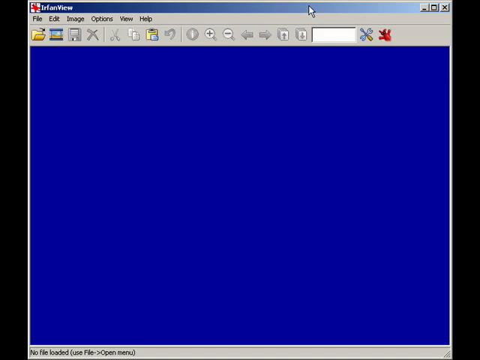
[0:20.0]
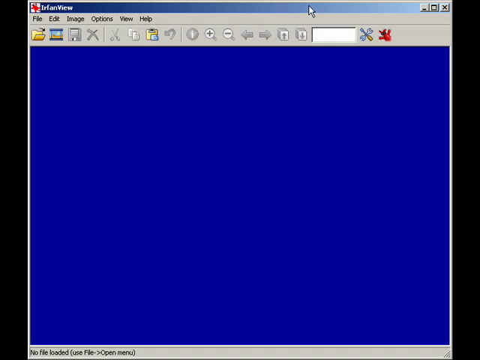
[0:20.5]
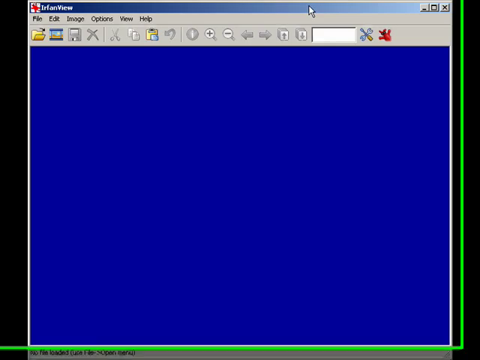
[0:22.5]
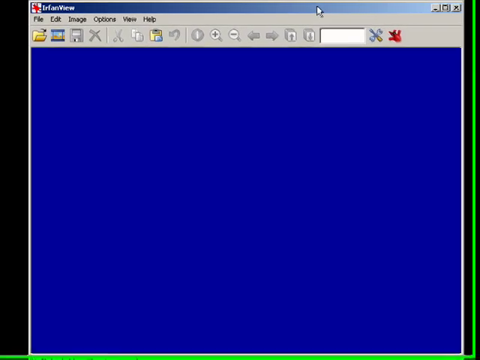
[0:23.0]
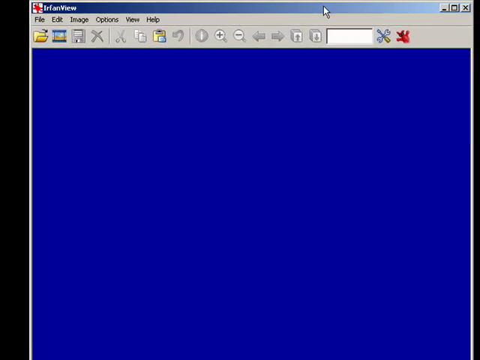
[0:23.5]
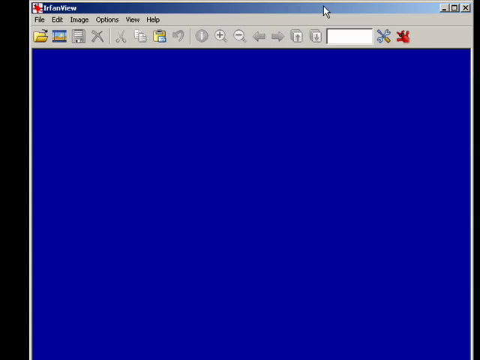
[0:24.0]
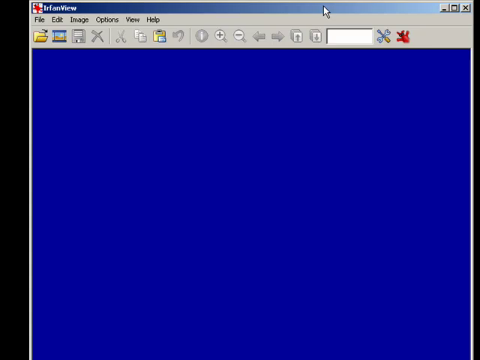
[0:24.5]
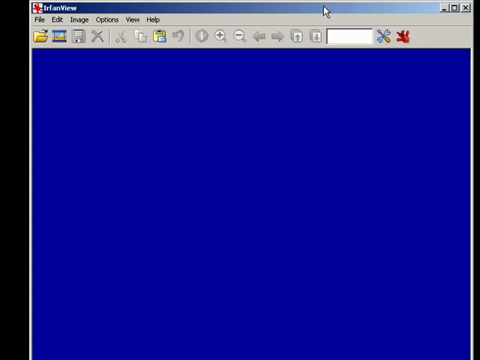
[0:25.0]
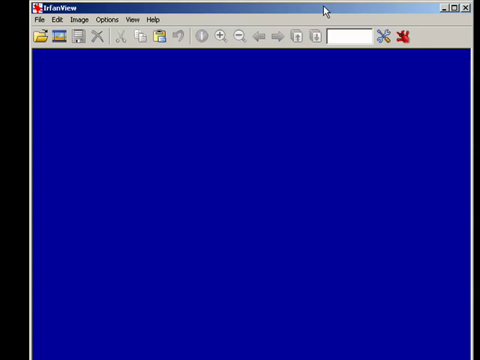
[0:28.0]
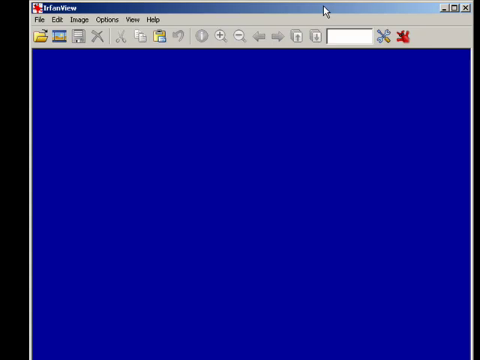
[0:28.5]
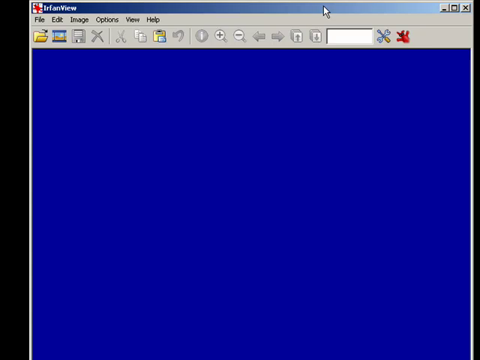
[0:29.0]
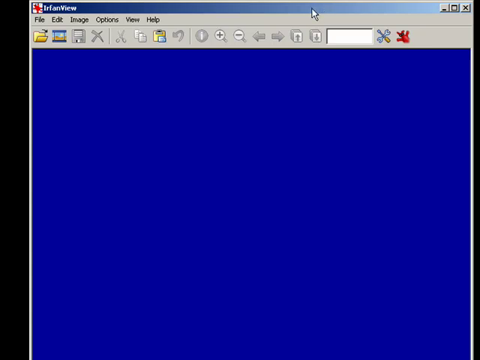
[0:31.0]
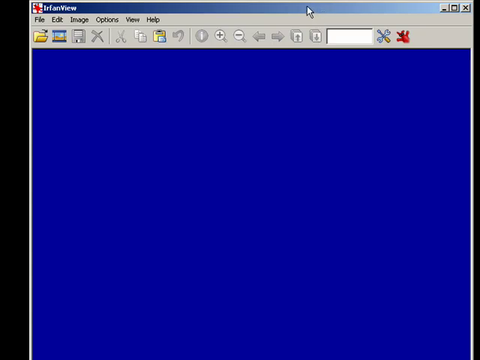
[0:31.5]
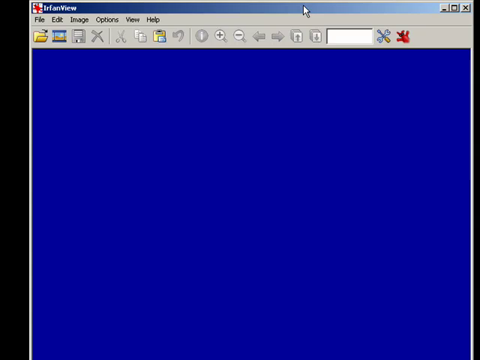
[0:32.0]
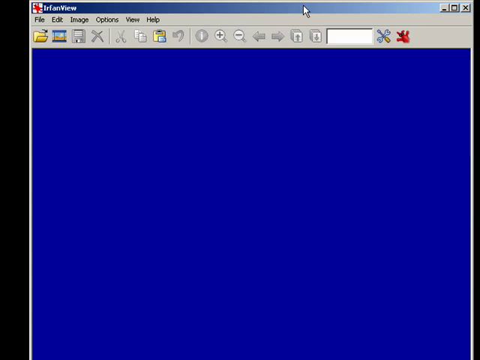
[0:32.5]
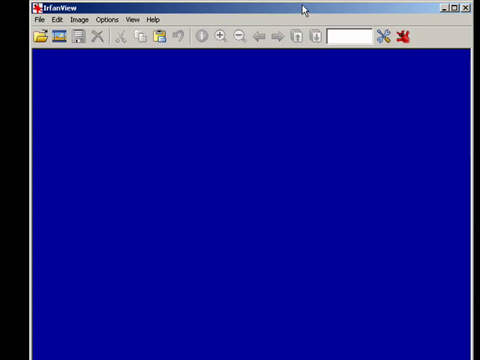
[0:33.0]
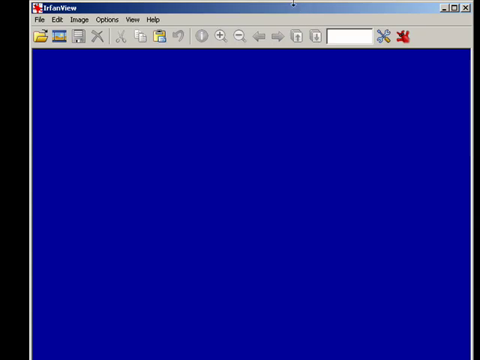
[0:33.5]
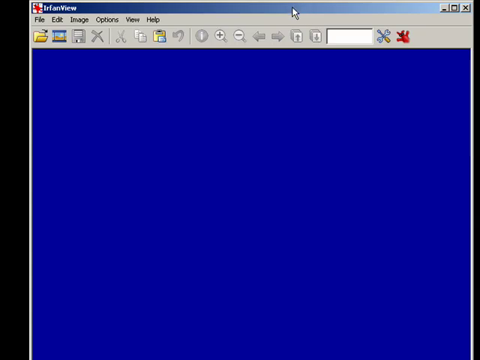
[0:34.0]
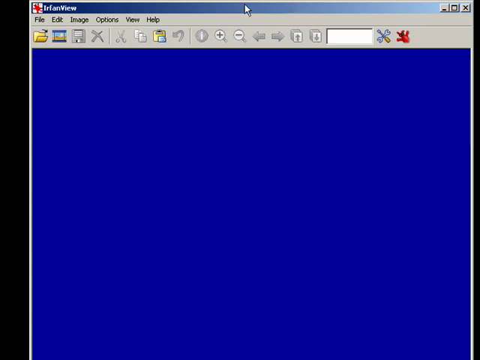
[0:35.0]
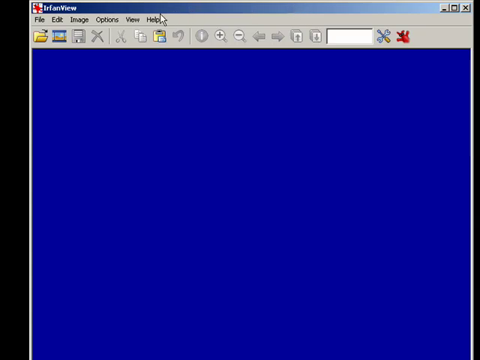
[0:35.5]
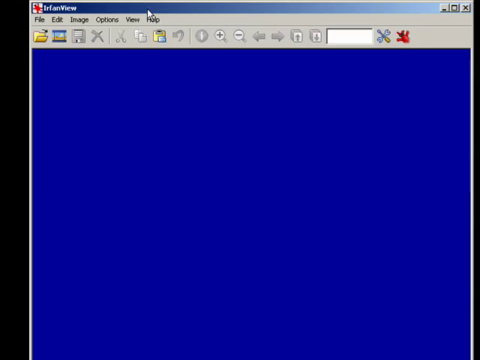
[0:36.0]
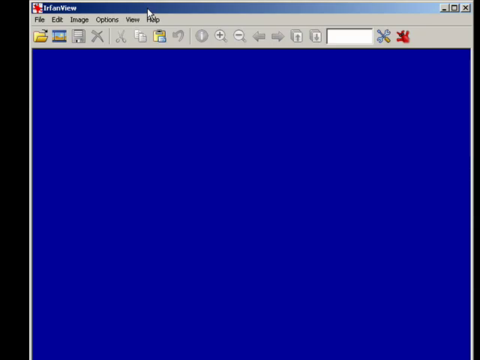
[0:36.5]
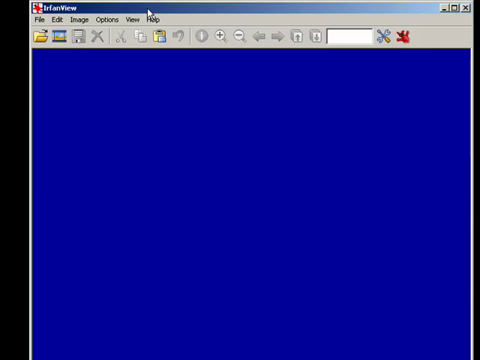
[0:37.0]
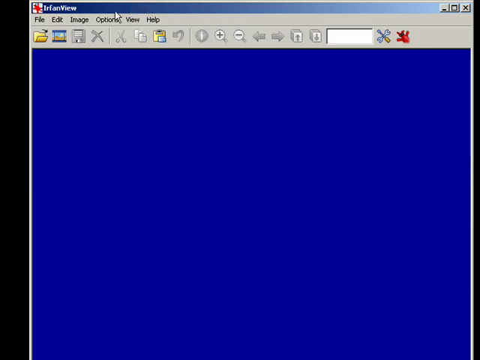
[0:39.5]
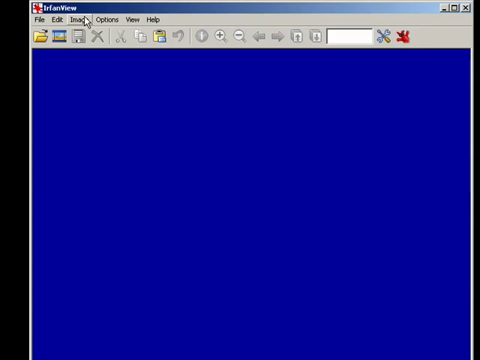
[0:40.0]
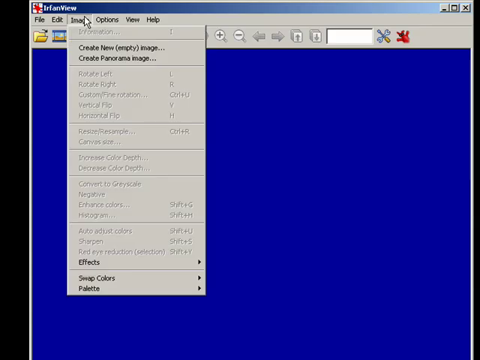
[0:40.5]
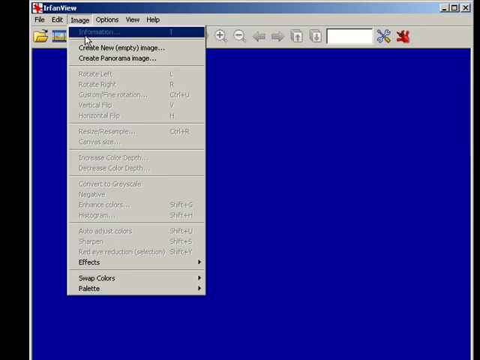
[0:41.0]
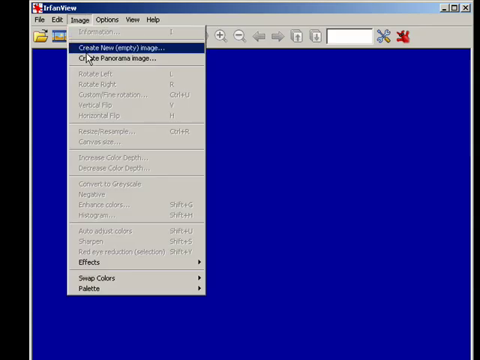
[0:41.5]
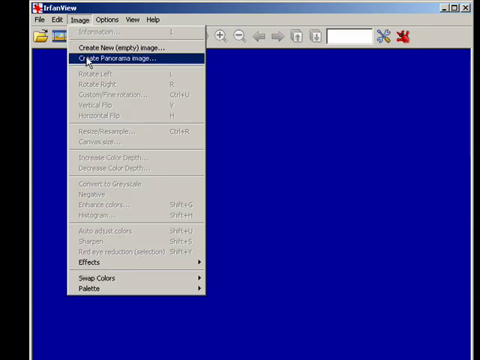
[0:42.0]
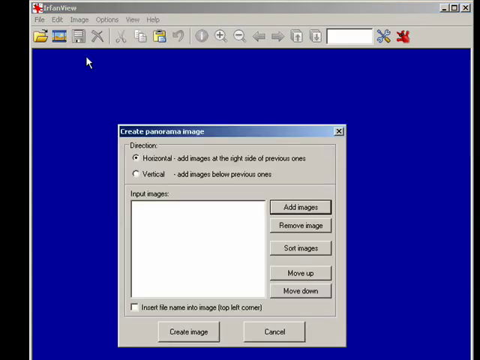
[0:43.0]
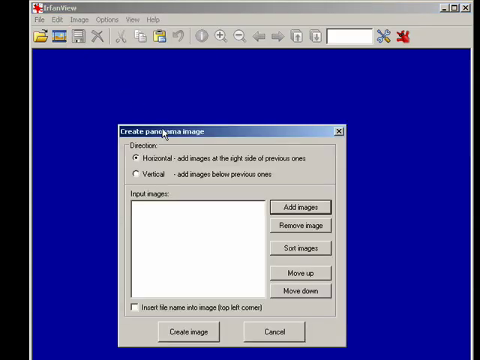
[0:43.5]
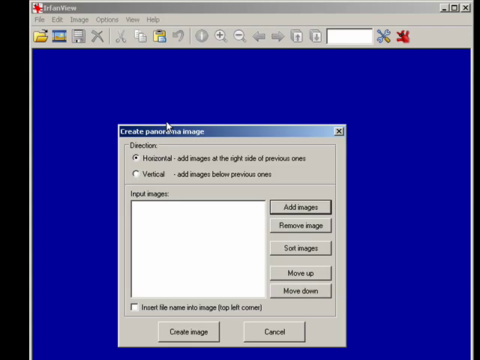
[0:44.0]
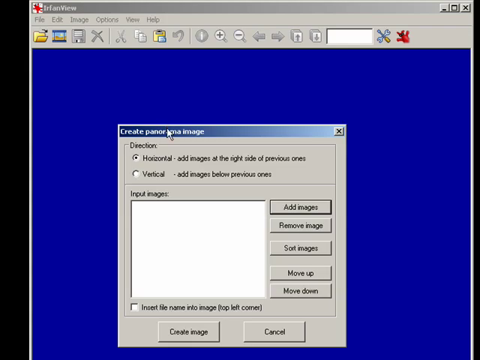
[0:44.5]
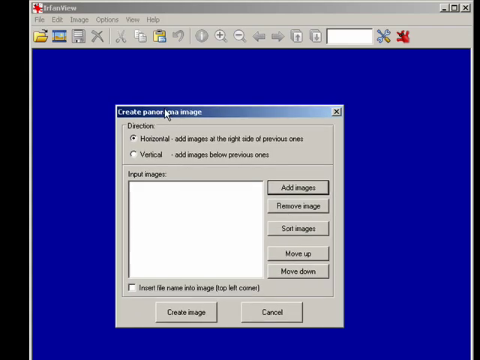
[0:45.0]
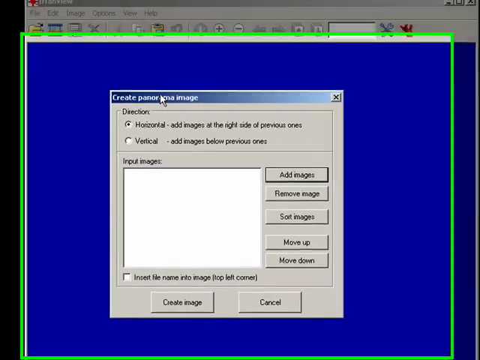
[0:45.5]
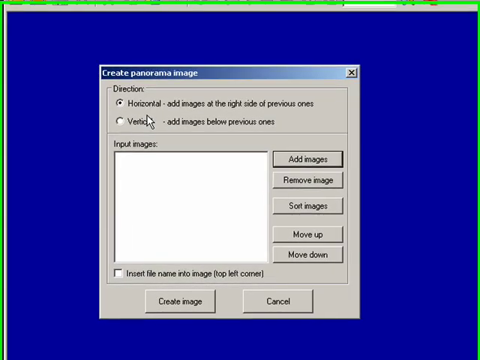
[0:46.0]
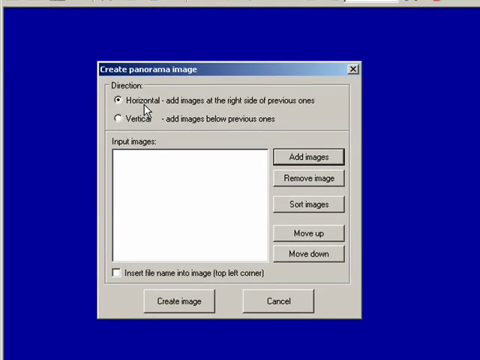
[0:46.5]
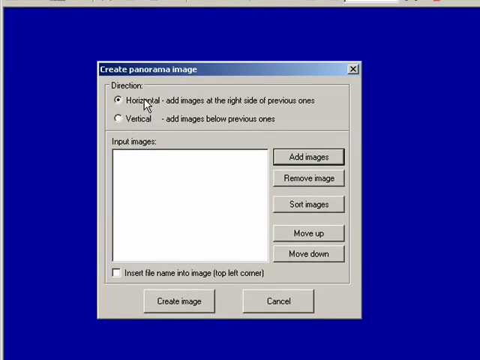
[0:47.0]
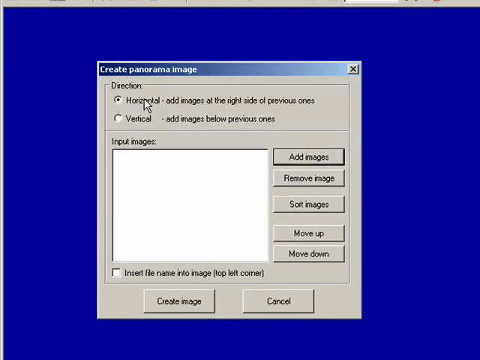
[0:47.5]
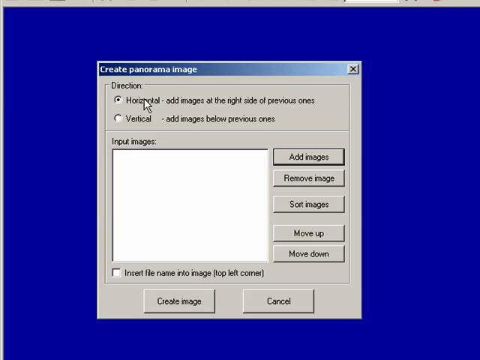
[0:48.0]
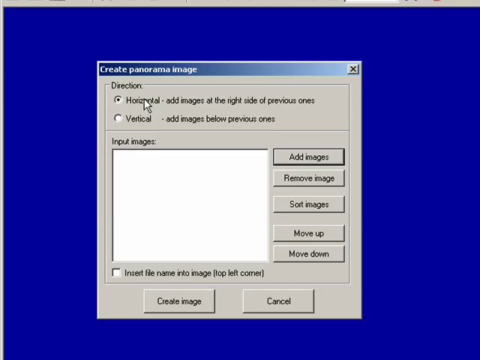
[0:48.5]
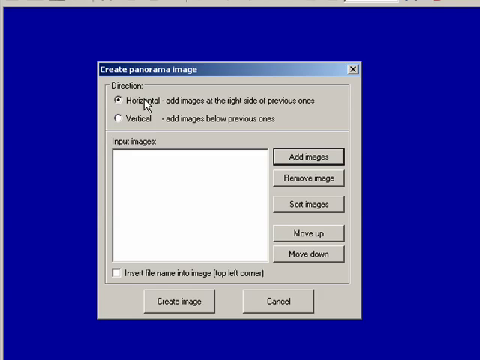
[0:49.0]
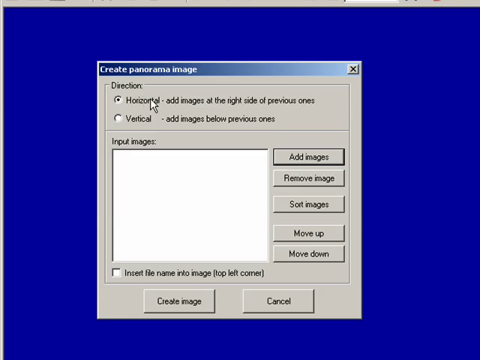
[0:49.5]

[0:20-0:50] After a click, the document suddenly extends a little to the right, with a green vertical line on the right apparently showing where the program window is going to be; it is white. On the right side there is a narrower black bar. No caption explains the change. The arrow moves a little to view and help without clicking anything, then goes up in a kind of half circle over the other menu items toward image. As the cursor passes over each item, it becomes like a little button that kind of pops out, almost 3D with an edge, whereas before it was flat. A click opens the image drop-down list, which includes "create new empty image" and "create panorama image"; items highlight in blue as the cursor passes over them. Most of the items, such as rotate left or right, increase color depth and decrease color depth, are grayed out. Effects has a right arrow for more options, as do swap colors and palettes at the bottom. The create panorama option is clicked, and a box appears at the top center with a blue bar reading "create panoramic image" in white writing. It has a horizontal option marked with a little dot, and an add images option. The view then zooms in a lot, probably about 30%.